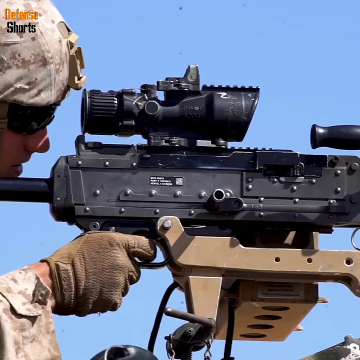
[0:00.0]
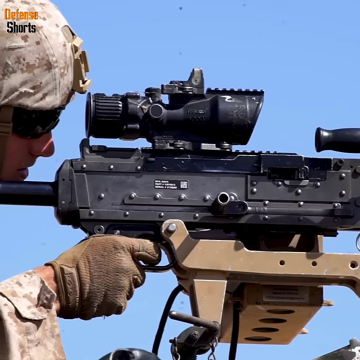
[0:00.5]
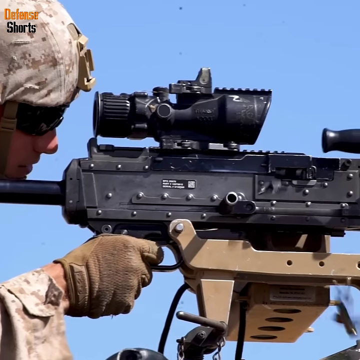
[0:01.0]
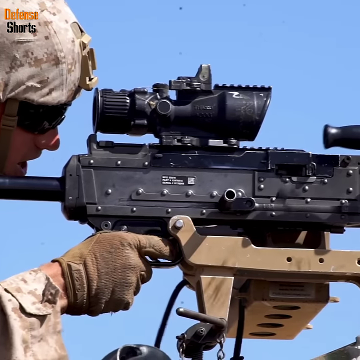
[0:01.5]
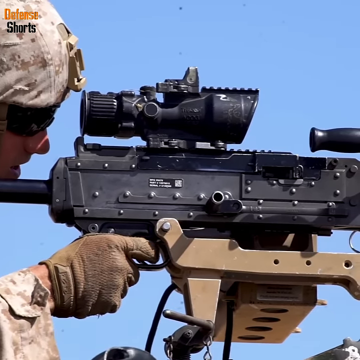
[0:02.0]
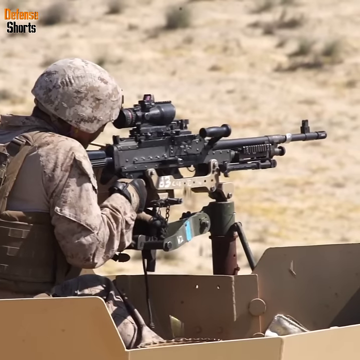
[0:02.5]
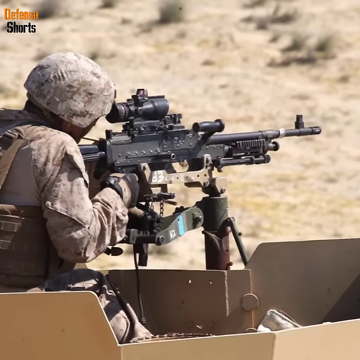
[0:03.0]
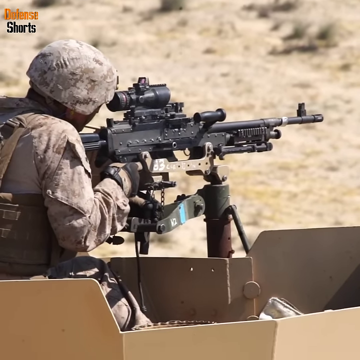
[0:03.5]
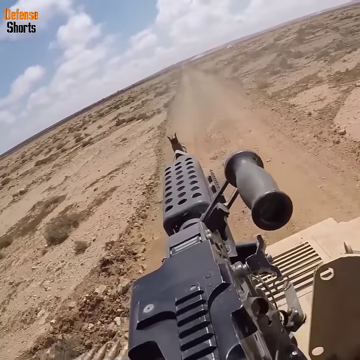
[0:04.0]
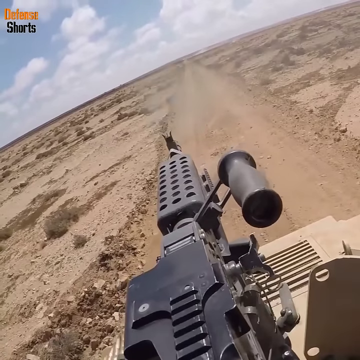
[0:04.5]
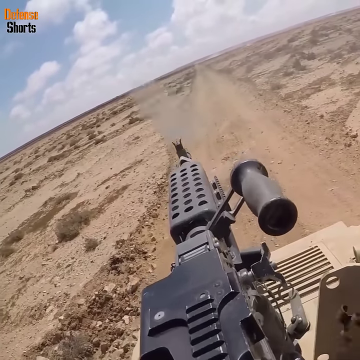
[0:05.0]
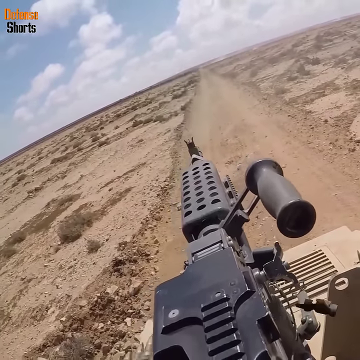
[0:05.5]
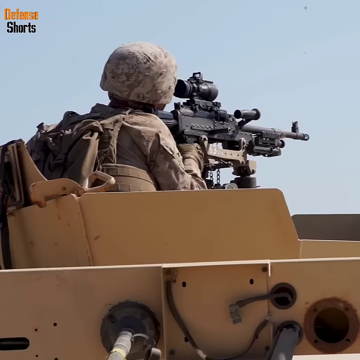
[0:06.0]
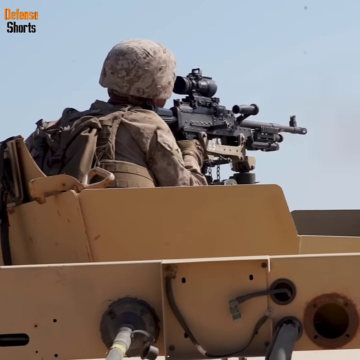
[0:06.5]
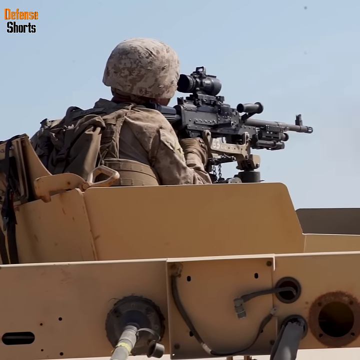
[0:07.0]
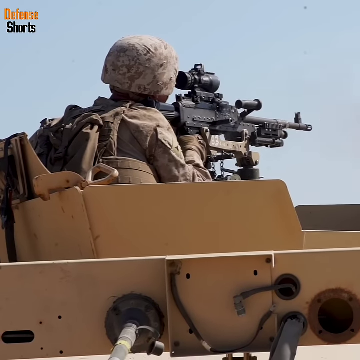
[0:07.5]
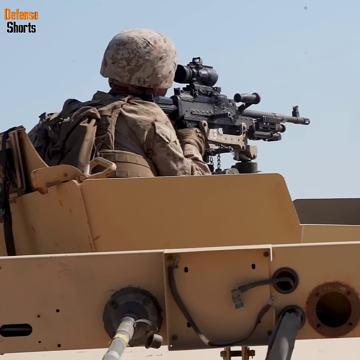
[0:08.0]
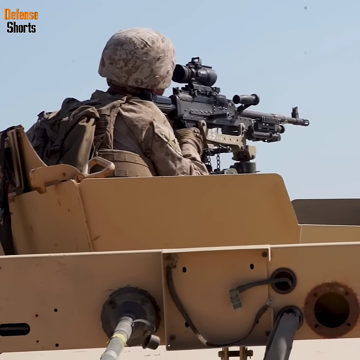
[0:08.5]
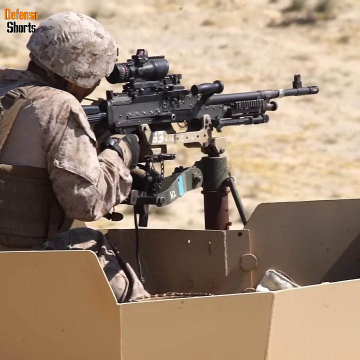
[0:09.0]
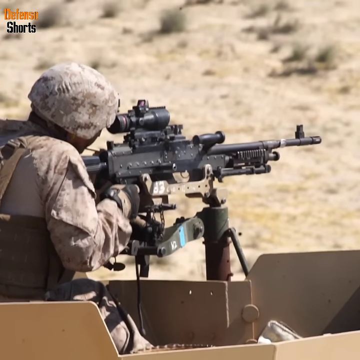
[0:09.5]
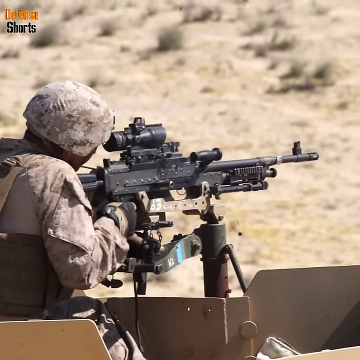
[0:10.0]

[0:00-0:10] A close-up side view shows a soldier firing an automatic submachine gun, peering through the scope as he shoots. The gun vibrates with each bullet that comes out of it. The soldier wears a full camouflage uniform and a pair of dark shades. From the side, only his head, his hands and the side of the gun are visible against a blue sky background. Next, more of the soldier is shown from head to waist, with the entire profile of the gun highlighted against tan-coloured desert sand as the gun continues to vibrate. Another view follows from above the gun, as if from the soldier's viewpoint: the gun is pointed toward the horizon, where the sky and the clouds mix with the desert sand, and it continues to vibrate and emit bullets. Then the soldier is seen from the side and behind, seated in the compartment of an armored tank and shooting, his entire body vibrating from the force of the gun being fired.